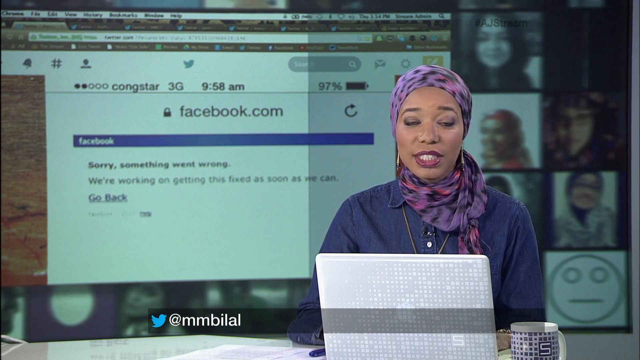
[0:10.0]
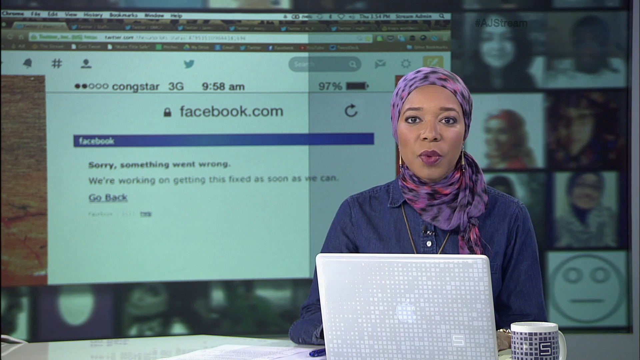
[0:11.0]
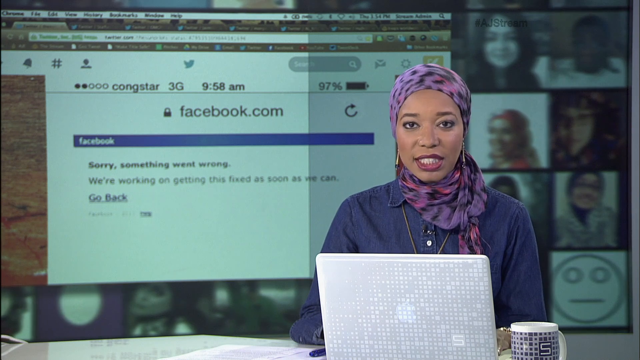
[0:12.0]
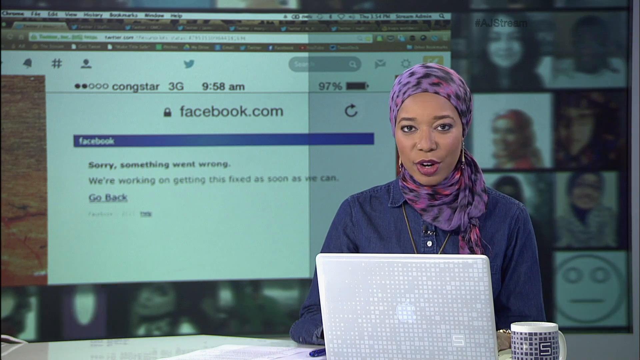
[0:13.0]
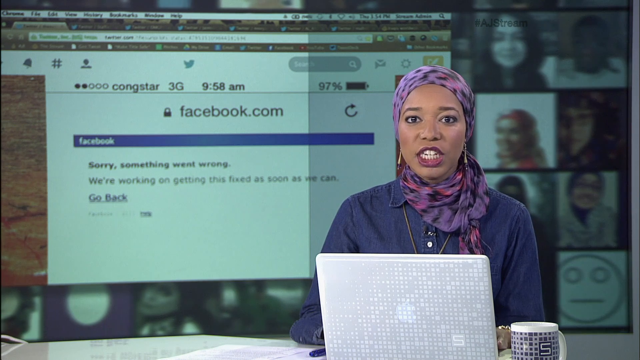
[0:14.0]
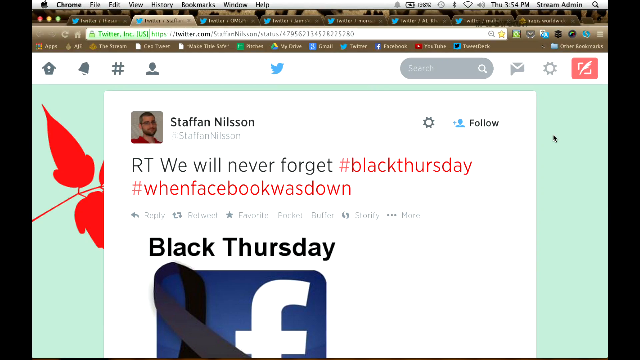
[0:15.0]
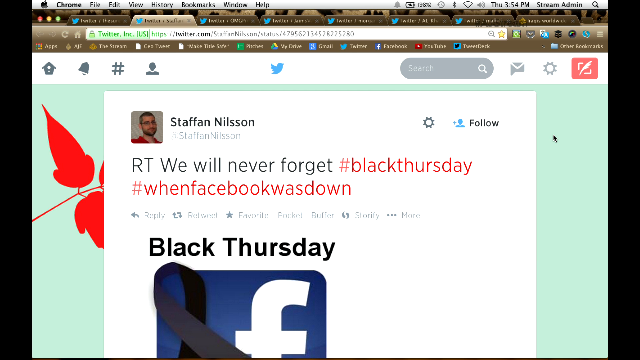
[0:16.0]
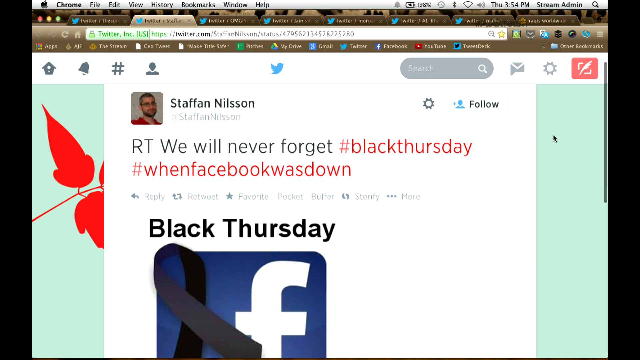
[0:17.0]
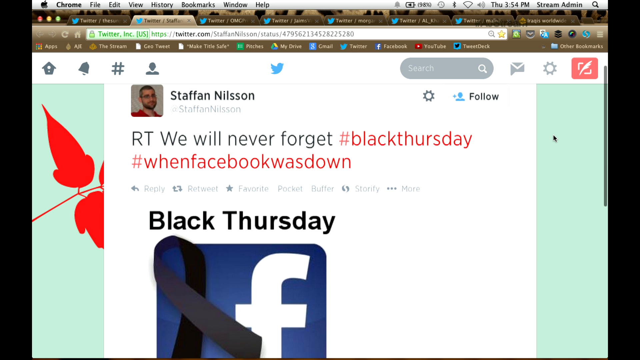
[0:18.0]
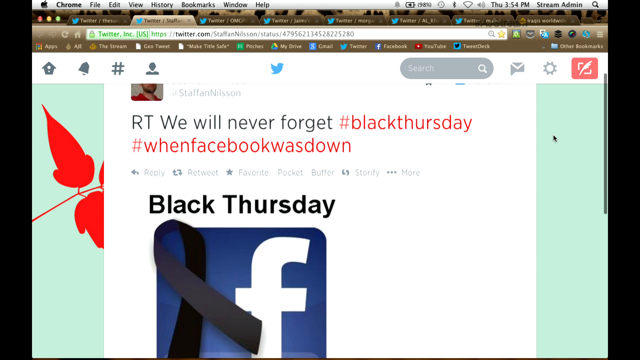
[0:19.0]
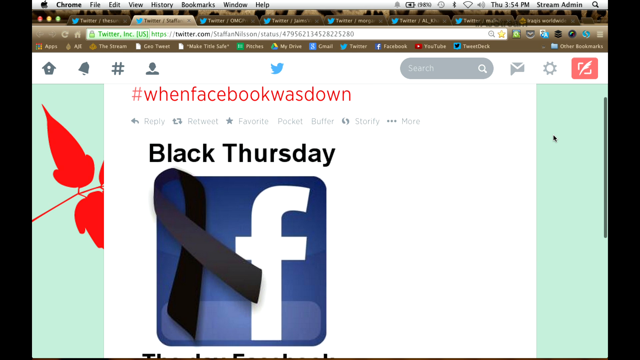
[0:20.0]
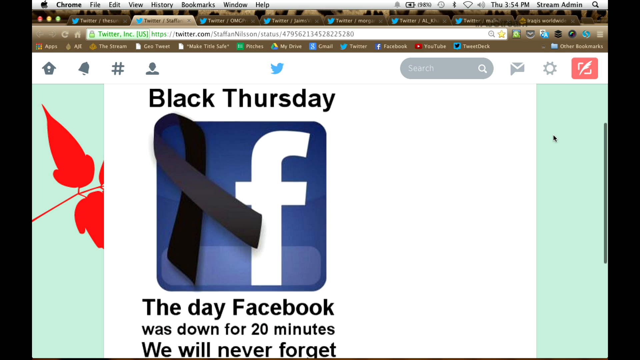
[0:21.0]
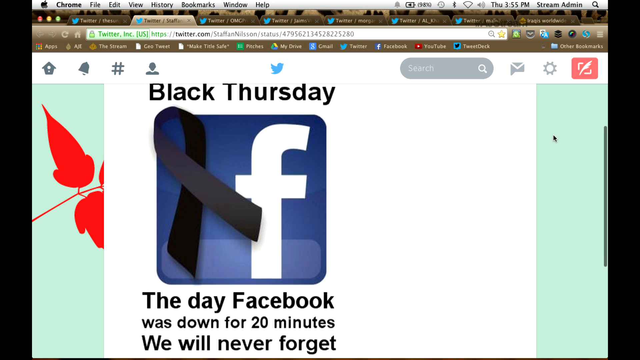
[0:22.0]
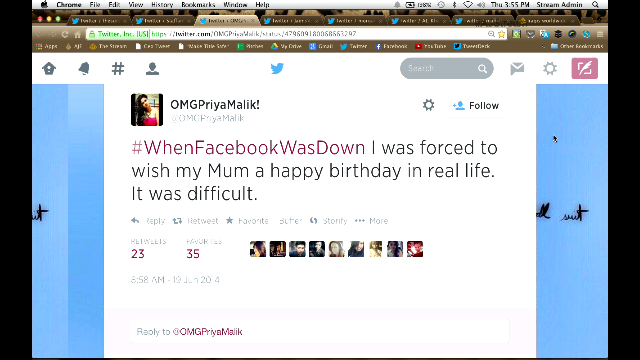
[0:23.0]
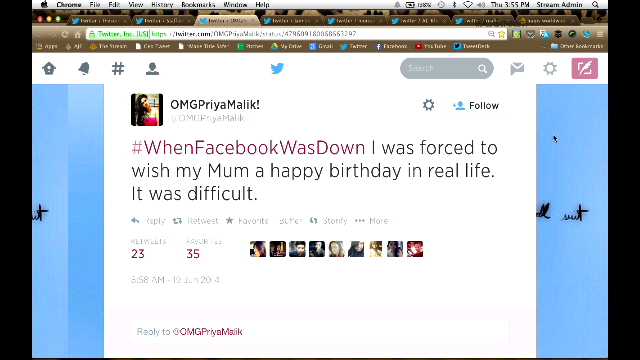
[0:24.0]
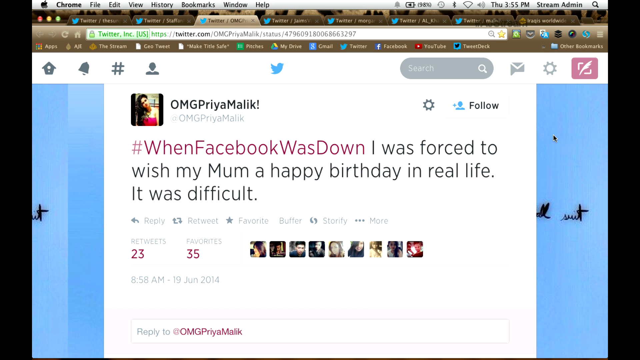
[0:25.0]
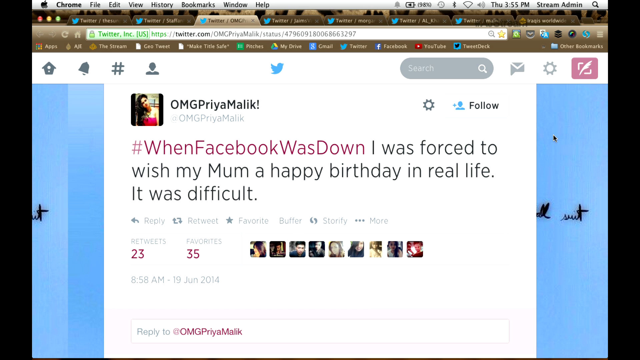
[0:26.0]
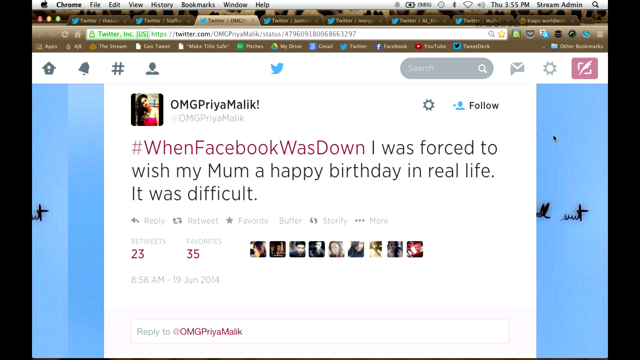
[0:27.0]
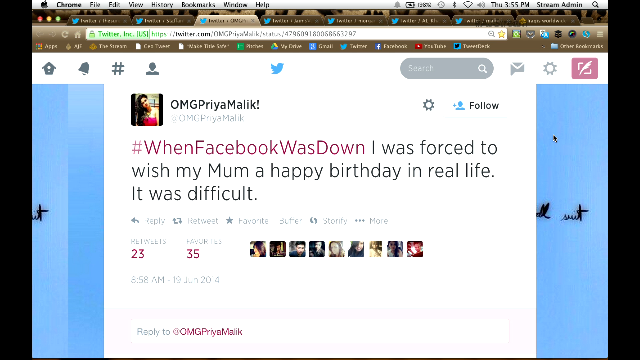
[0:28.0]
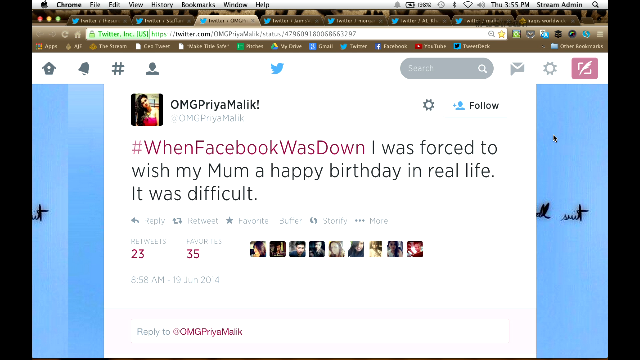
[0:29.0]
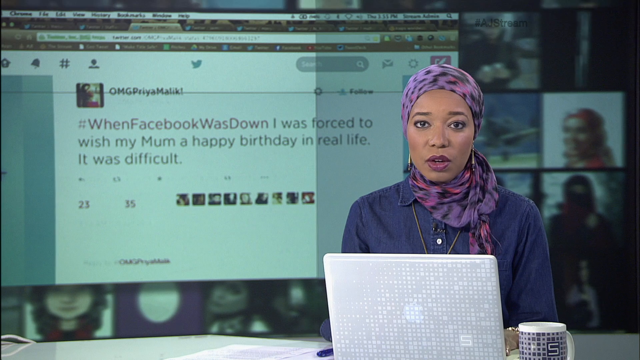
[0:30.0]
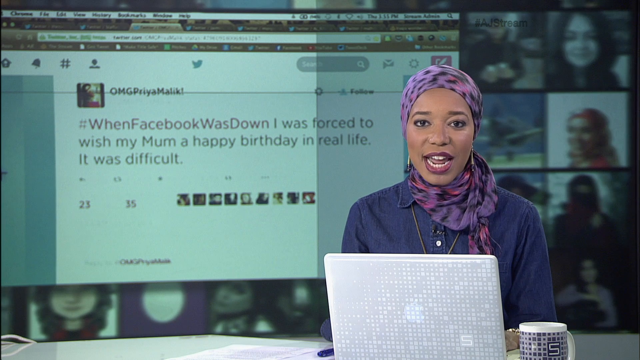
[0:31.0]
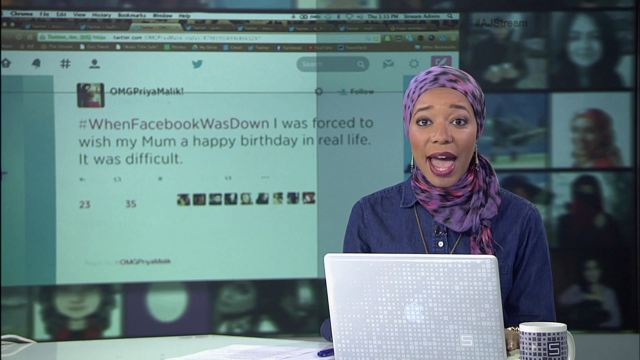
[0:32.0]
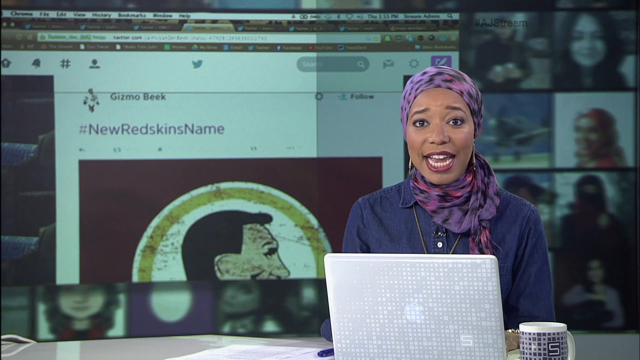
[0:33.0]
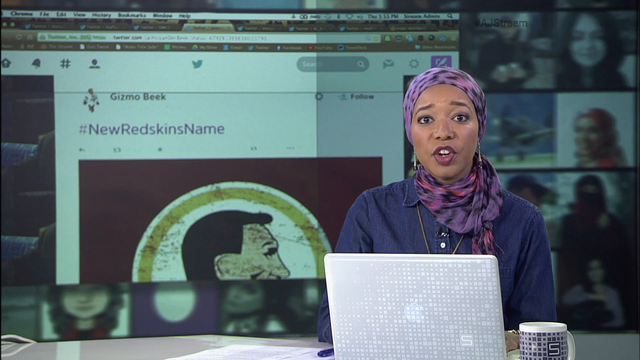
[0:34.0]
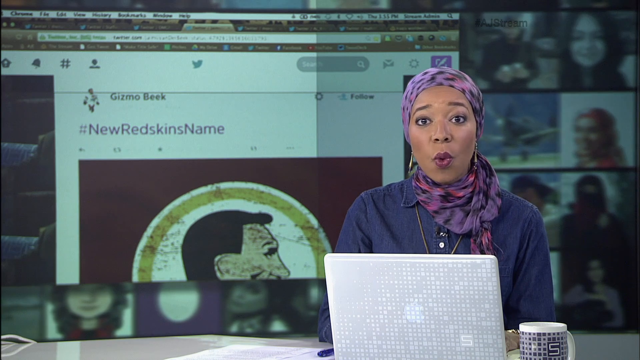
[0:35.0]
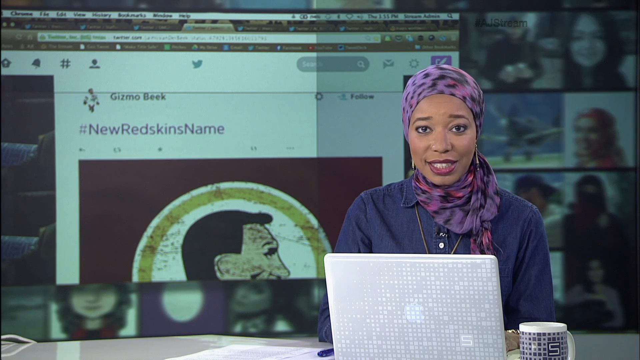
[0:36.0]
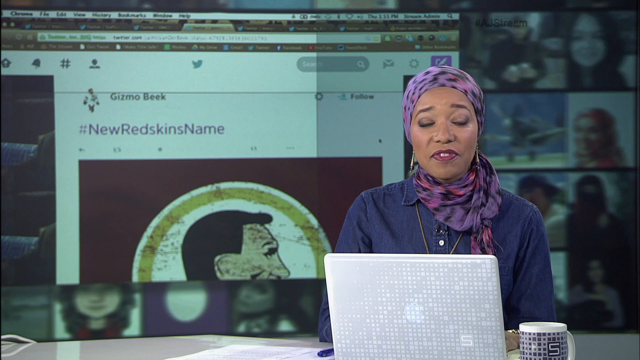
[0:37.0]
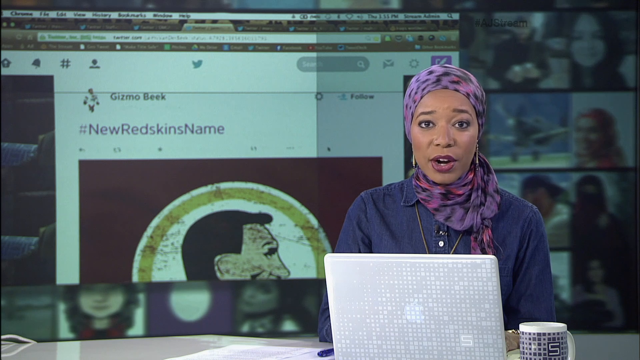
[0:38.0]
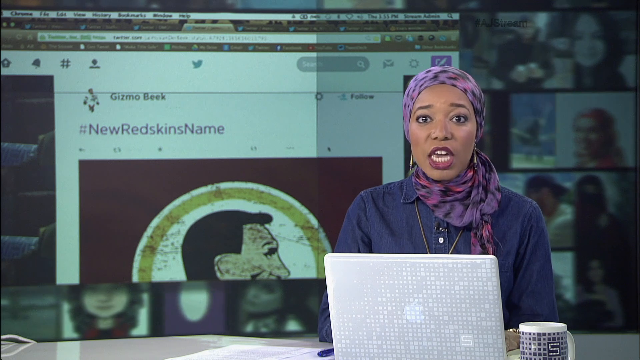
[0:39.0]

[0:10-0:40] A reporter is on the right side of the screen, wearing a denim long-sleeve shirt with a gold chain, a purple bandana with black spots around her head, and a purple bandana scarf with black spots around her neck. A silver polka-dotted laptop is open in front of her. To the right behind her is a blurred collage of images, one of which says "facebook.com". The woman looks directly at the monitor. The screen changes to a page with the name Staff Nelson and text including "we will never forget", "black thursday" and "# when facebook was down", along with a logo that has a black ribbon on the side of a Facebook logo. Another page pops up, from omg priya malik, saying "# when facebook was down i was forced to wish my mom a happy birthday in real life it was difficult". The page changes again back to the woman, before it changes to another shot about the Redskins.